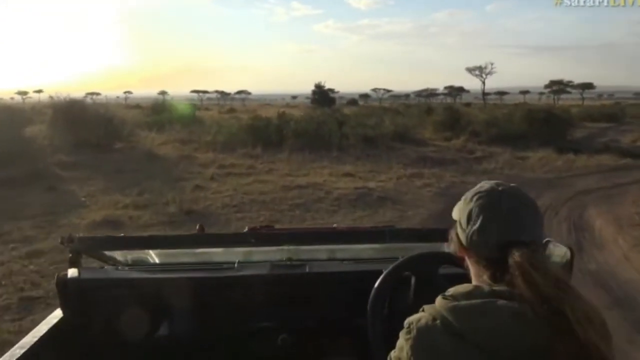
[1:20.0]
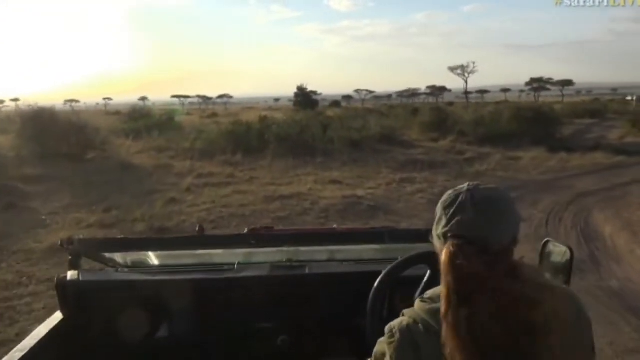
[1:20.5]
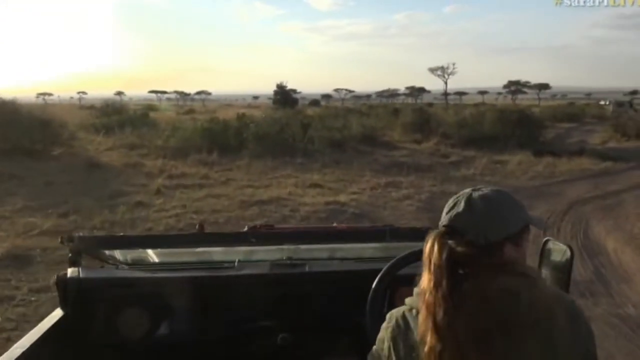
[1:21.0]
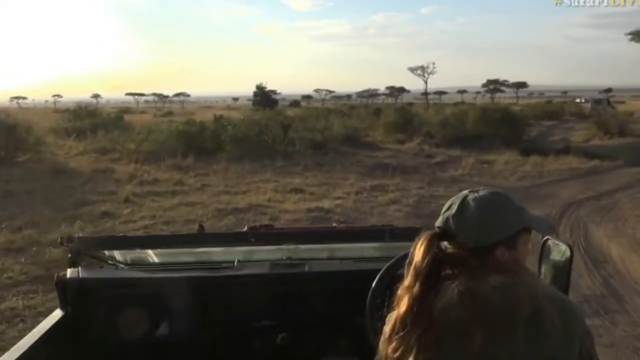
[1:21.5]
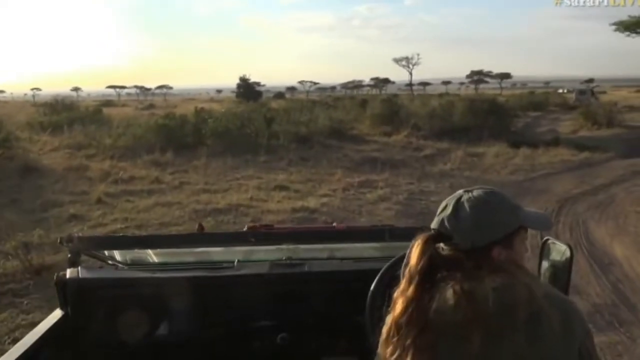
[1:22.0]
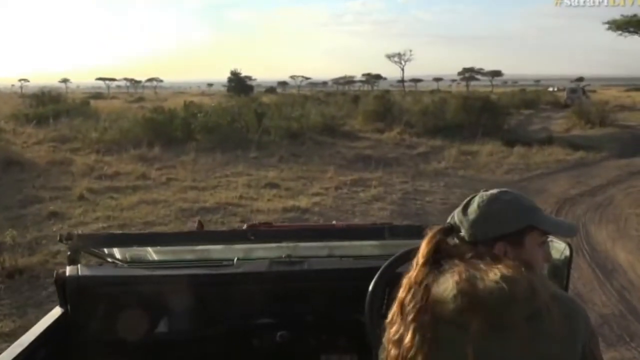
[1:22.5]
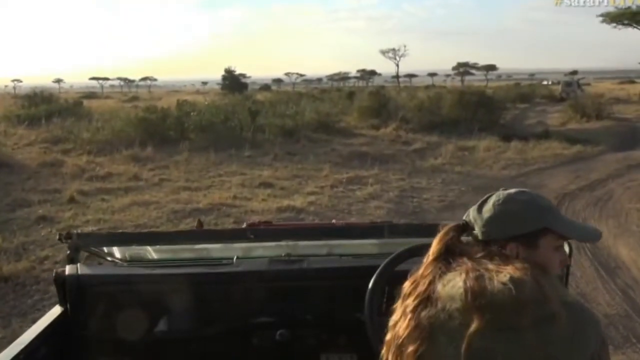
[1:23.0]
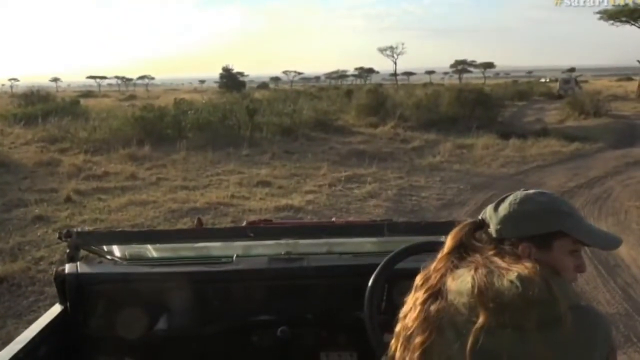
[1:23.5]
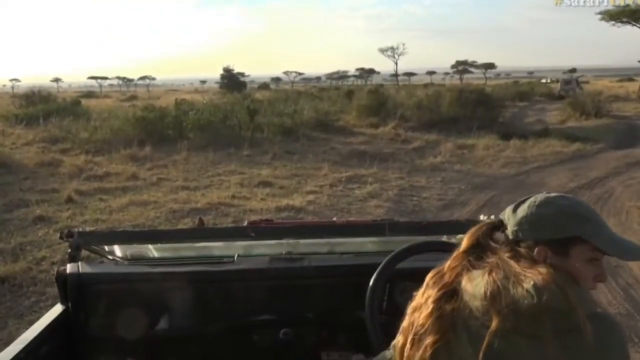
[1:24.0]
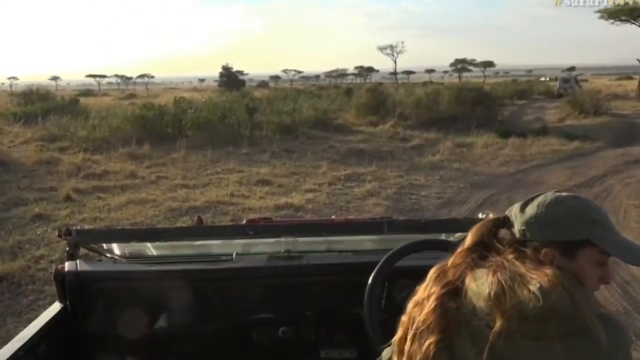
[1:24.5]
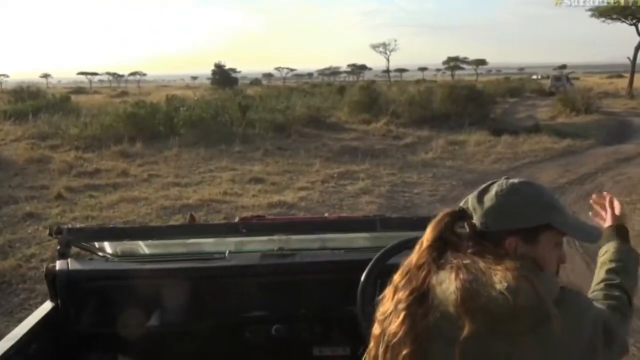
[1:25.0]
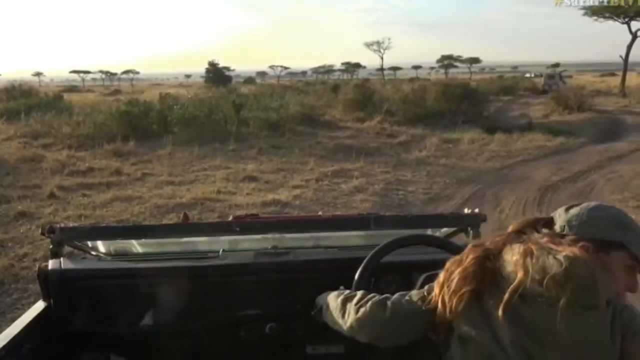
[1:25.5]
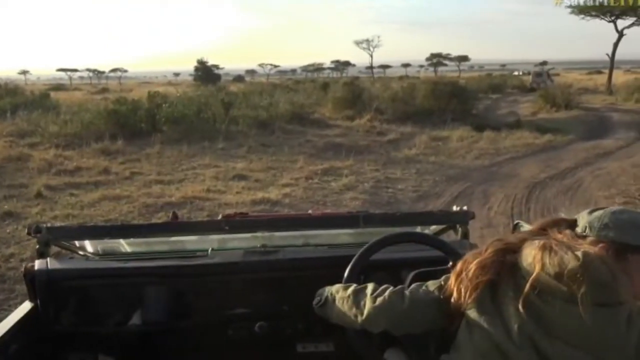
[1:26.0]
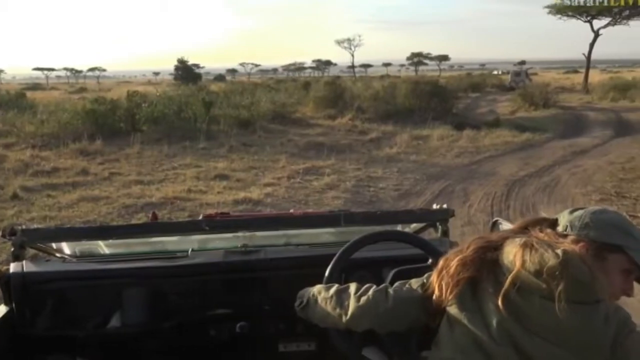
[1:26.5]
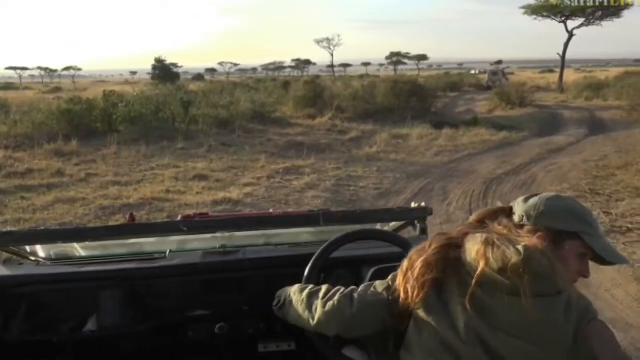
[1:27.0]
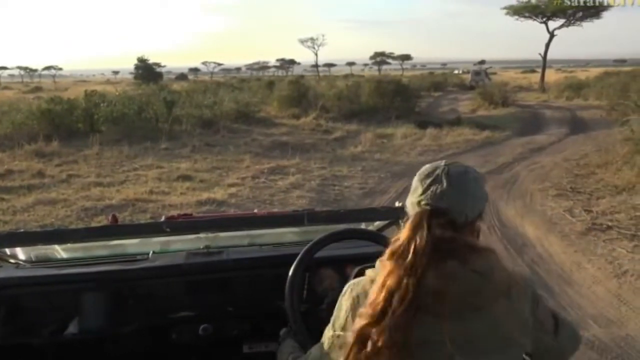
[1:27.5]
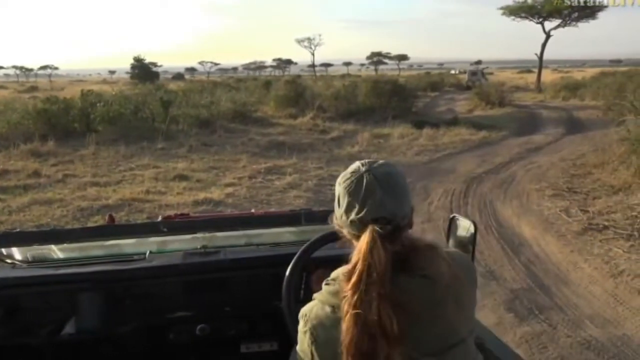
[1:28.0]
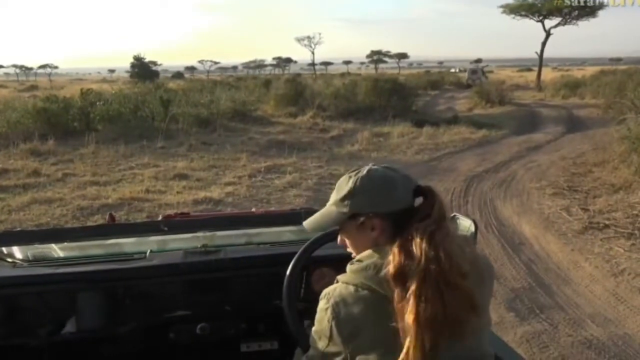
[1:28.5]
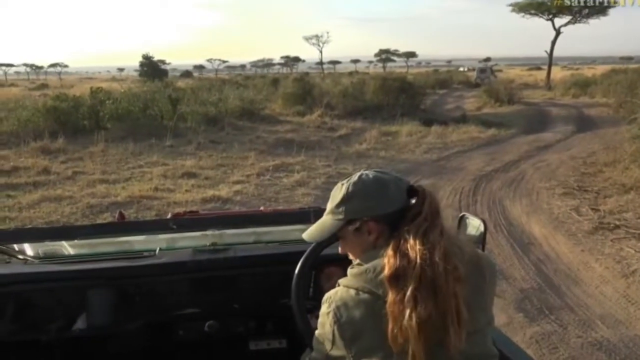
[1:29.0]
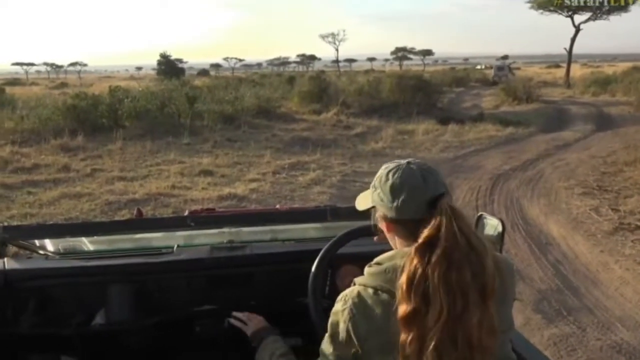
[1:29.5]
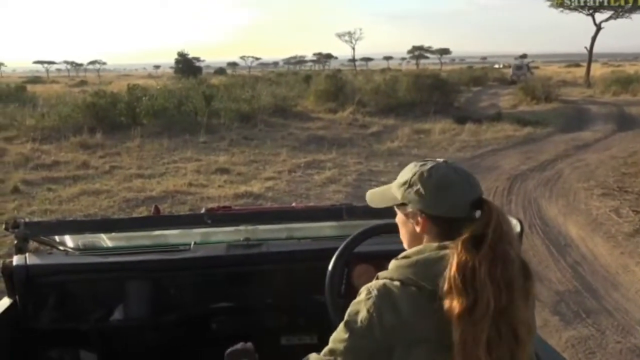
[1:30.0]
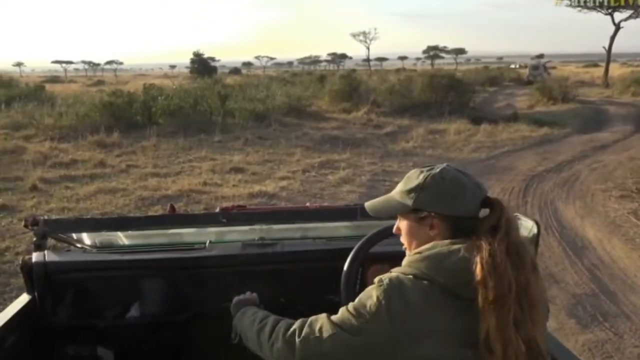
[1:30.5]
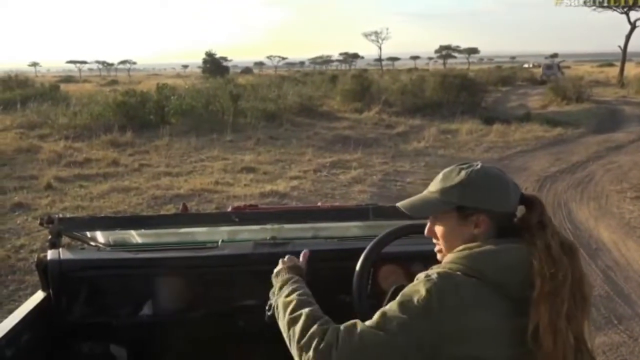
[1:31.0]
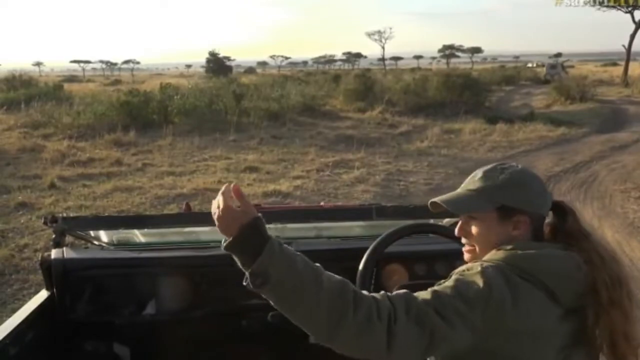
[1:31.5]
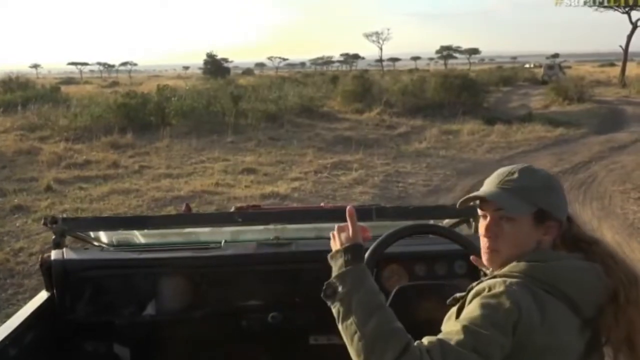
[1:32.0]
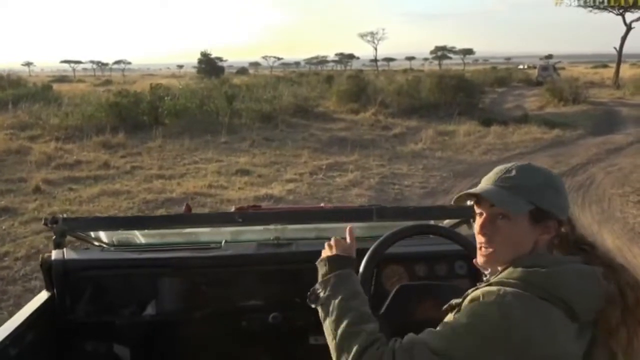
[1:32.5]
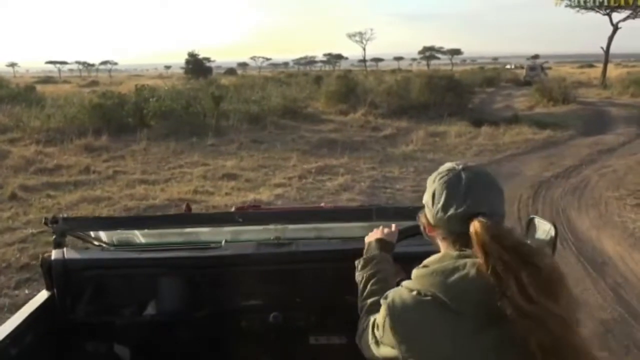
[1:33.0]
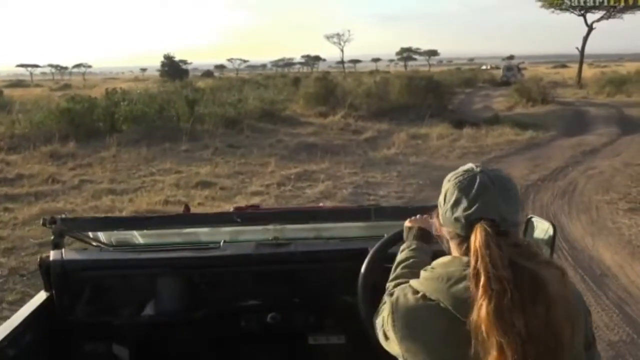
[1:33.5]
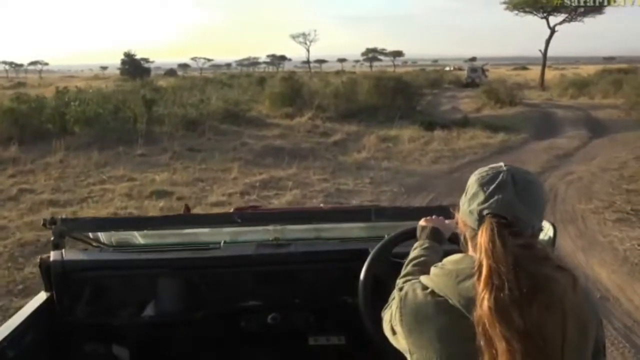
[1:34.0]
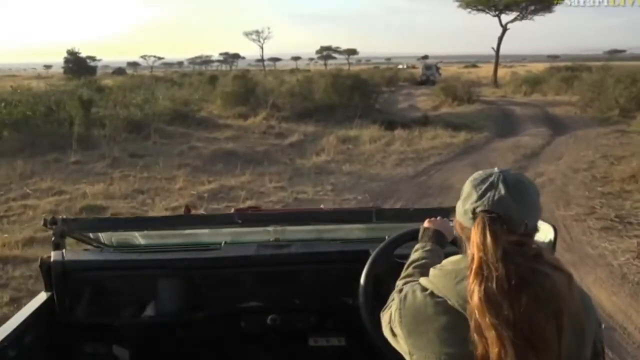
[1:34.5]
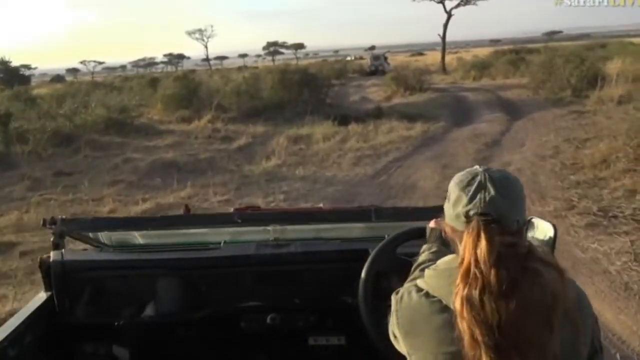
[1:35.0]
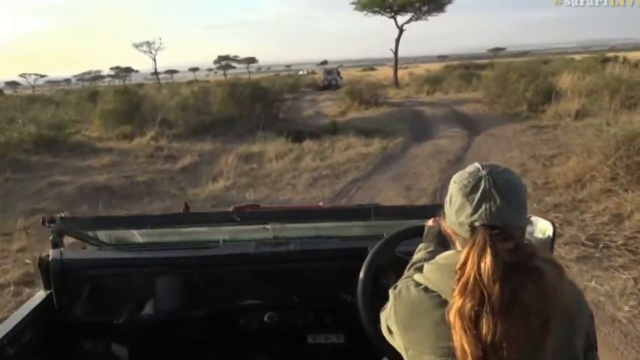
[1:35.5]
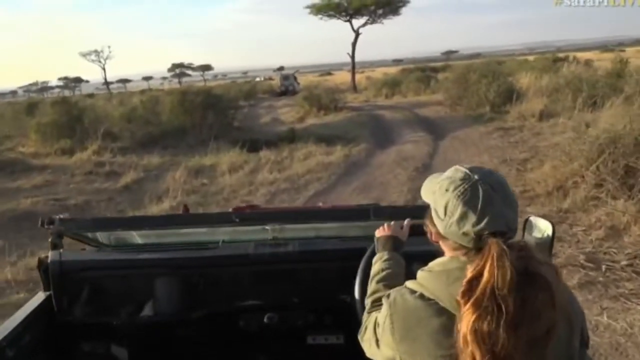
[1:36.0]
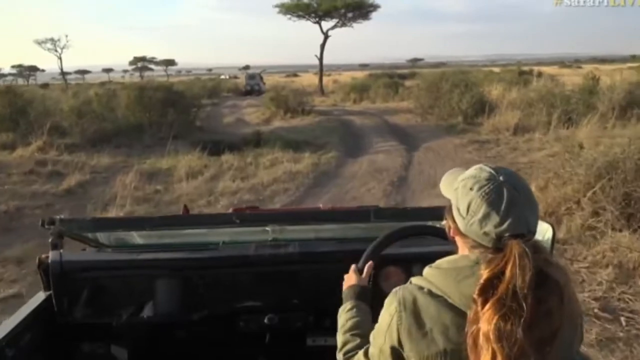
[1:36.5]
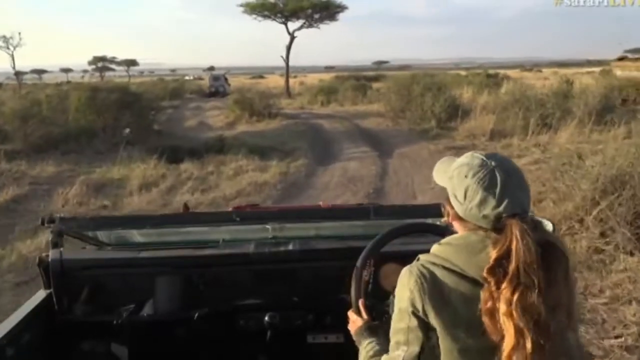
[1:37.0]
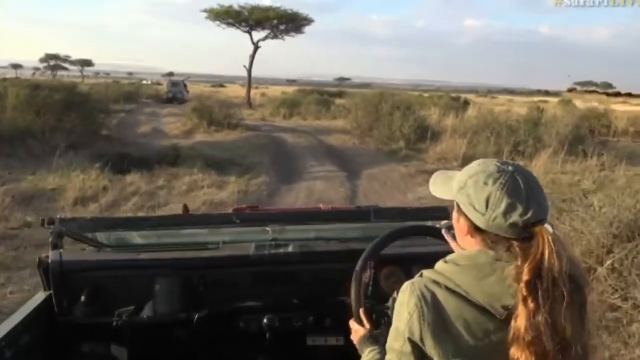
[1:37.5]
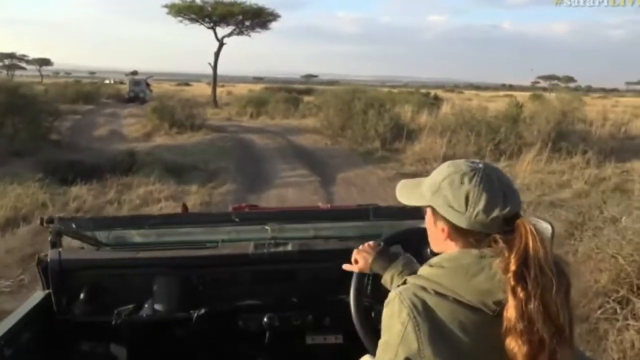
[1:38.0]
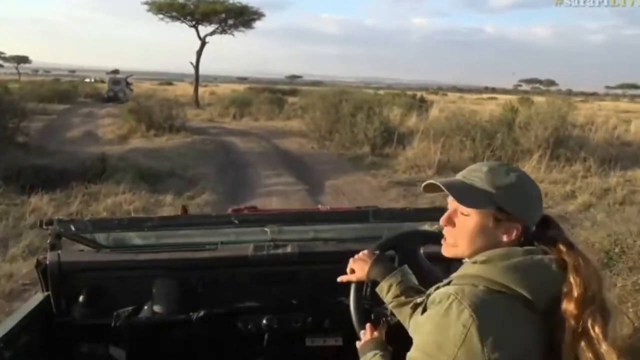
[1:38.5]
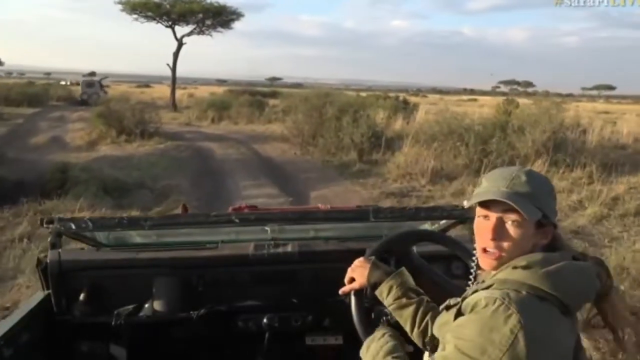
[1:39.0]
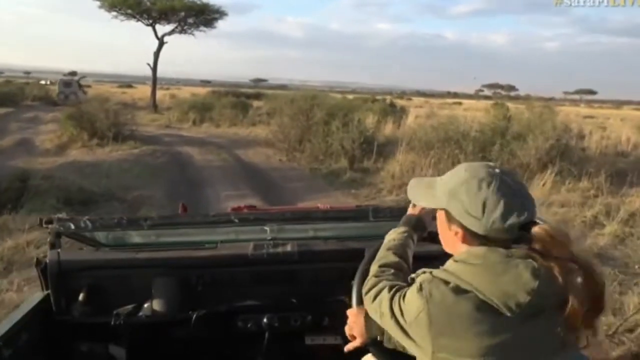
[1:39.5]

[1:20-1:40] The setting is safari land, apparently in Africa. It is dry and appears to be hot, with dry weeds and dry brush. The sky is pale white with baby blue on top, and the clouds look like one huge cloud. The view is from the back as a woman drives along a dry dirt road. She wears a ball cap and a green hooded jacket. The Jeep has no top and is totally open. She drives toward the setting sun, which looks like a ball of fire, pale but huge, on the horizon to the left. She looks from side to side and keeps turning all the way around to look back at the camera. She shifts gears as she drives and turns her body almost all the way around toward the camera.